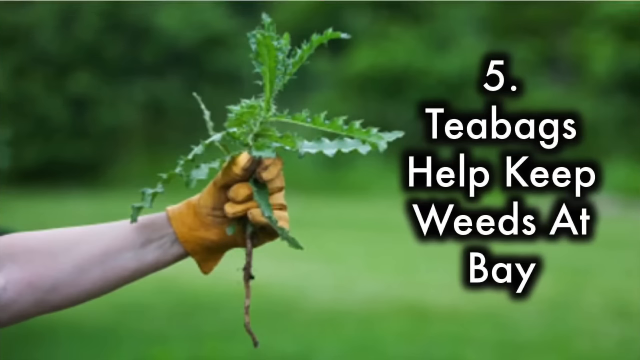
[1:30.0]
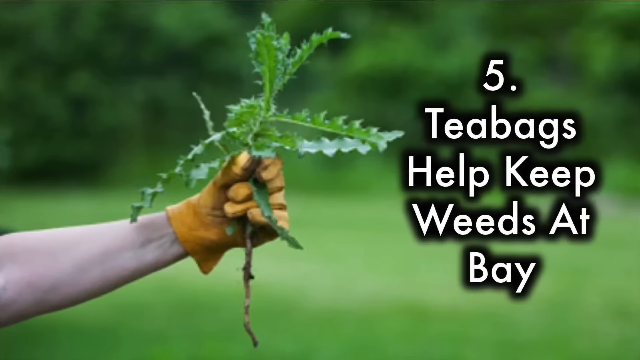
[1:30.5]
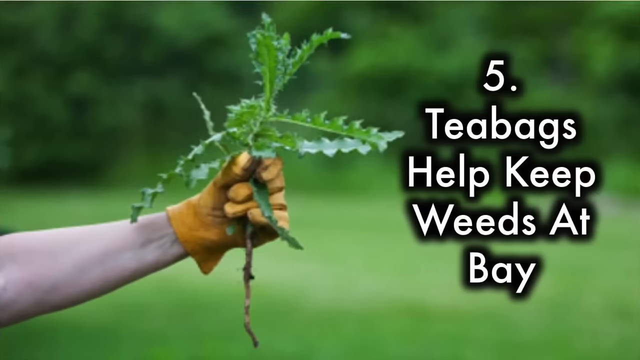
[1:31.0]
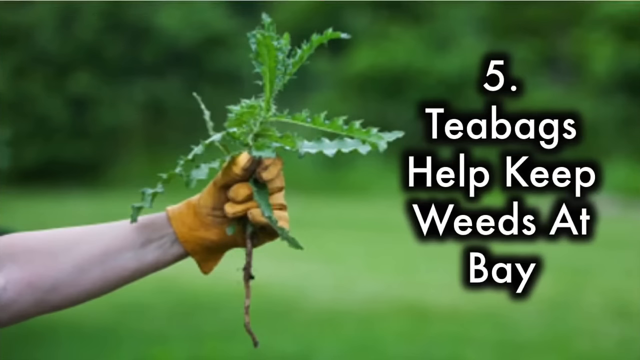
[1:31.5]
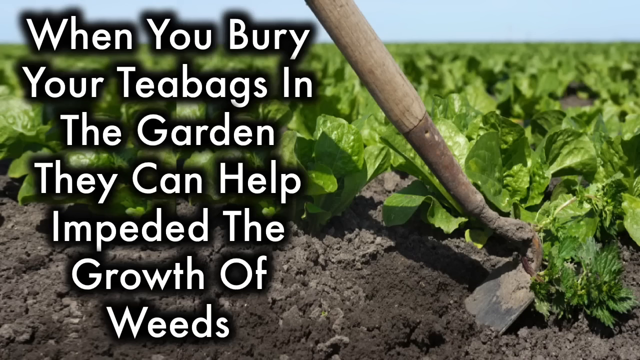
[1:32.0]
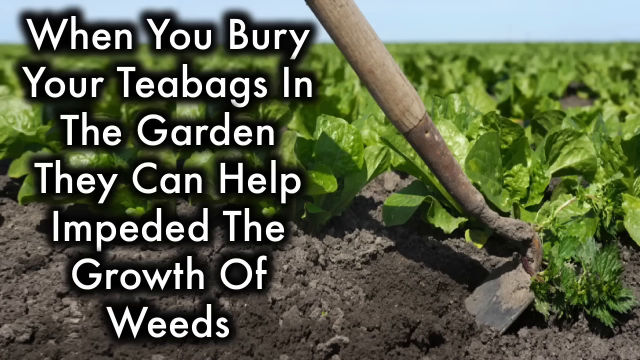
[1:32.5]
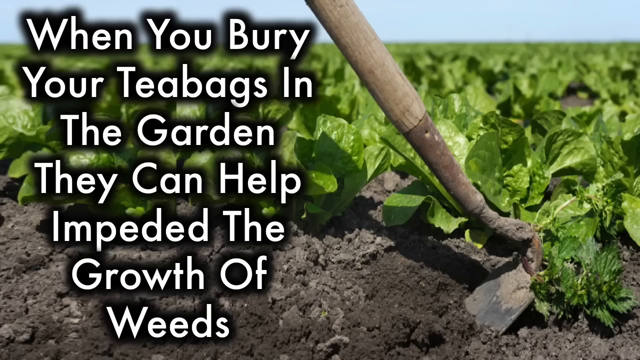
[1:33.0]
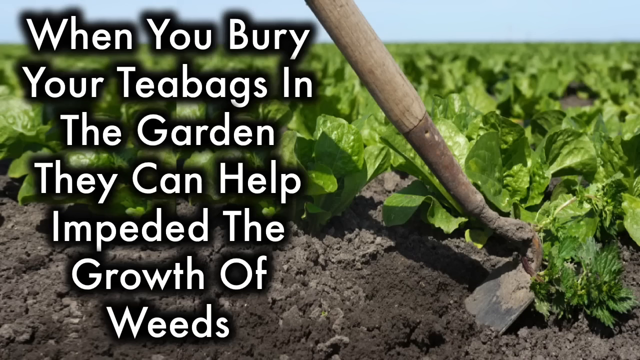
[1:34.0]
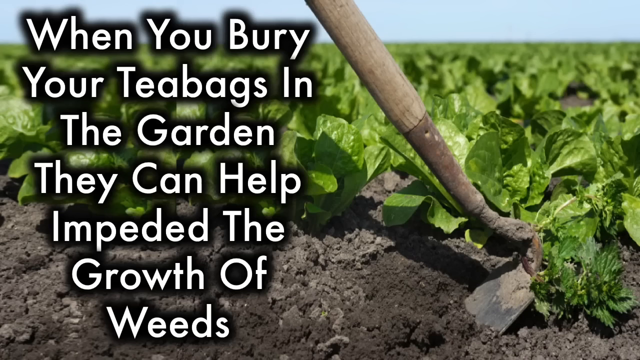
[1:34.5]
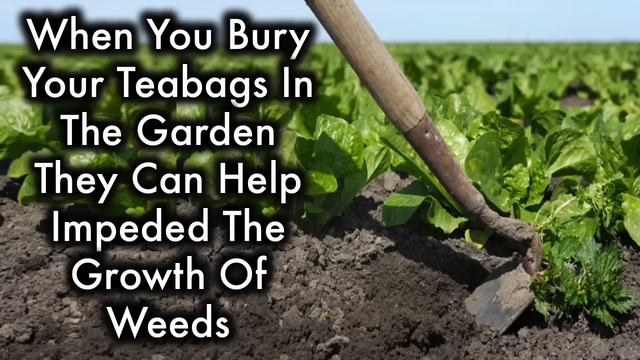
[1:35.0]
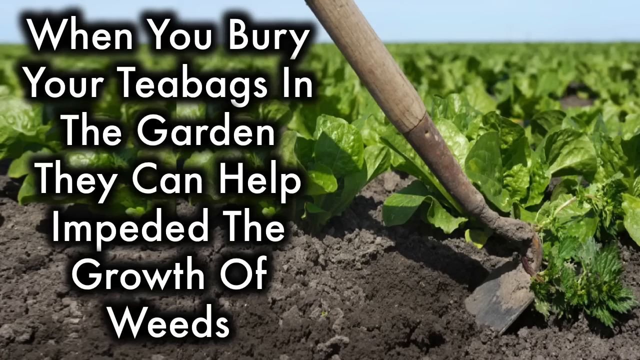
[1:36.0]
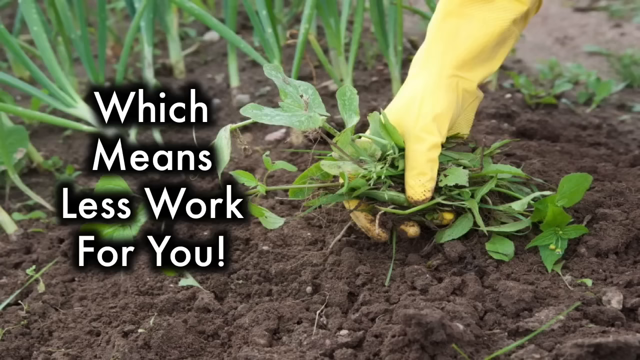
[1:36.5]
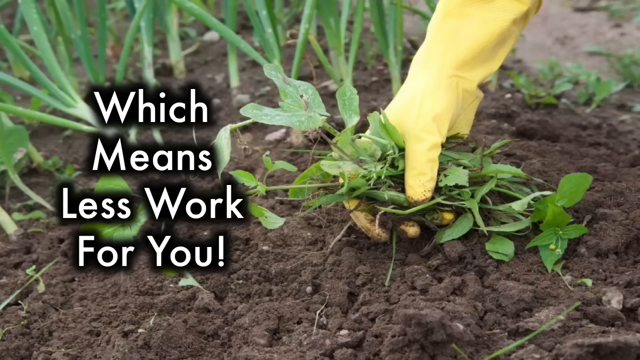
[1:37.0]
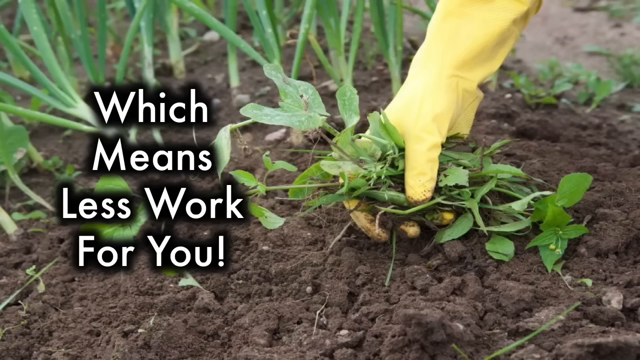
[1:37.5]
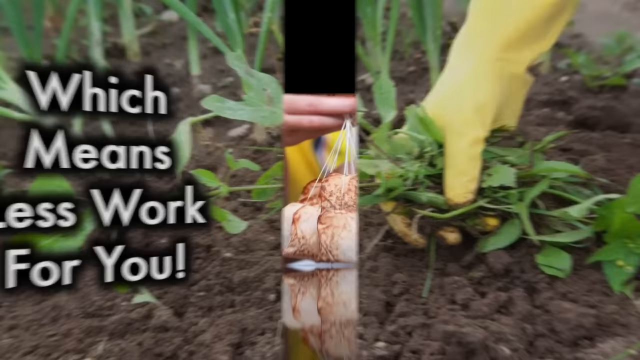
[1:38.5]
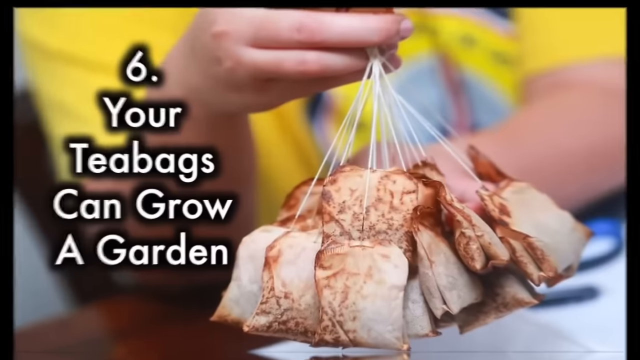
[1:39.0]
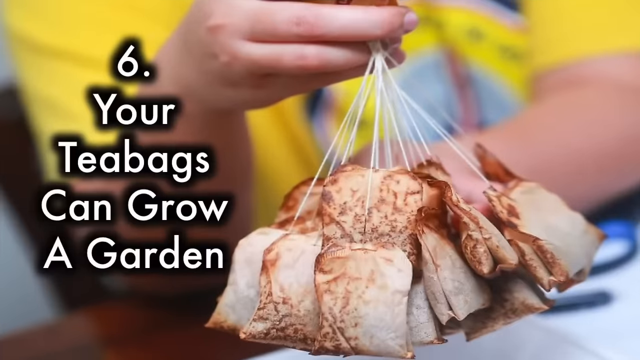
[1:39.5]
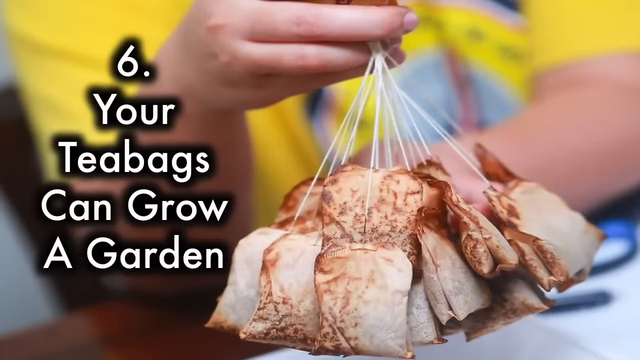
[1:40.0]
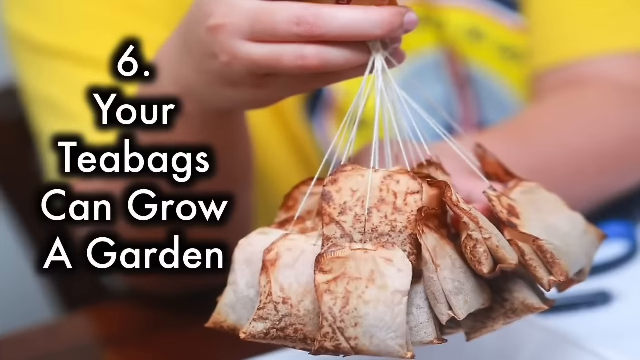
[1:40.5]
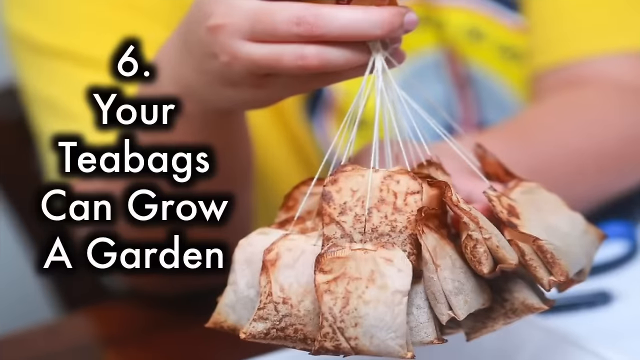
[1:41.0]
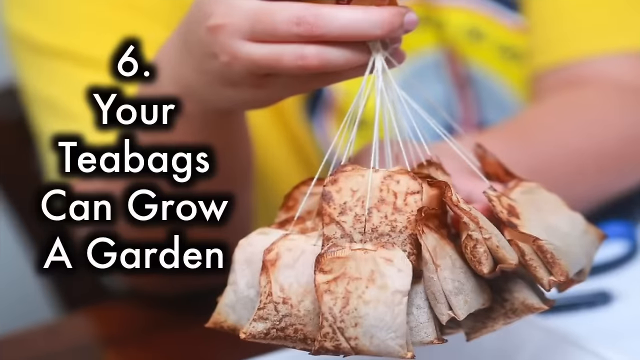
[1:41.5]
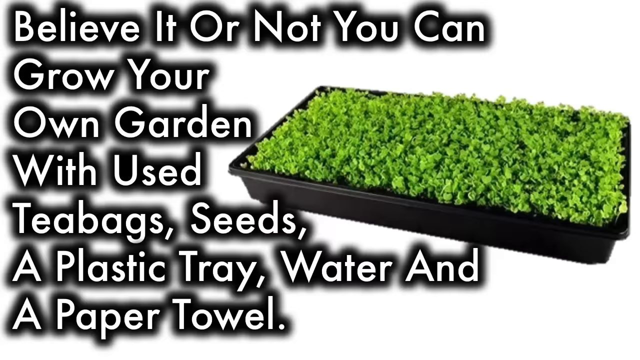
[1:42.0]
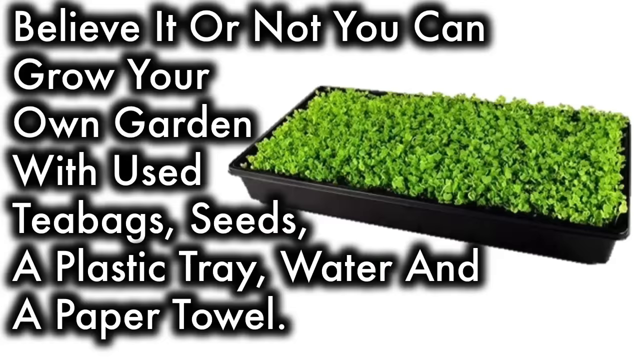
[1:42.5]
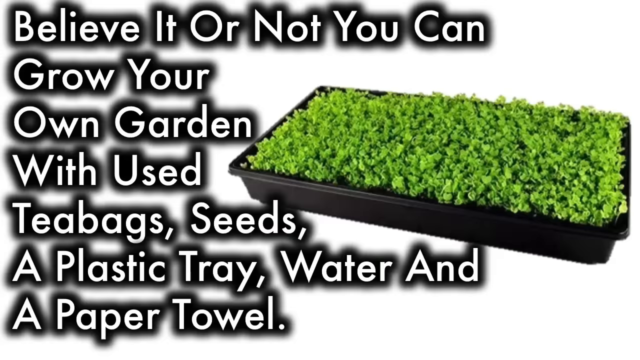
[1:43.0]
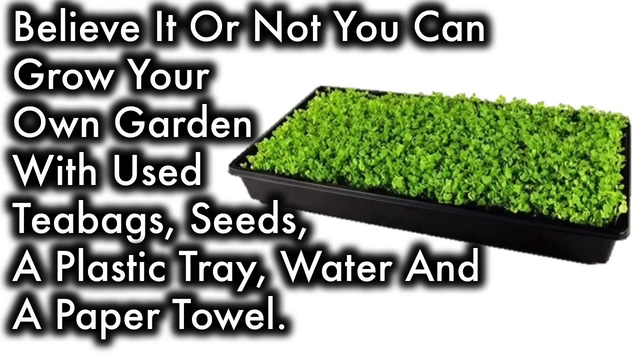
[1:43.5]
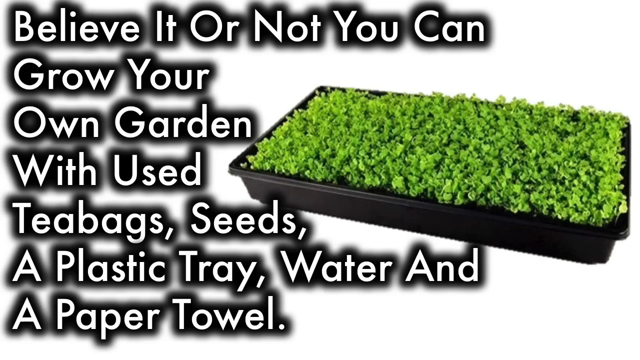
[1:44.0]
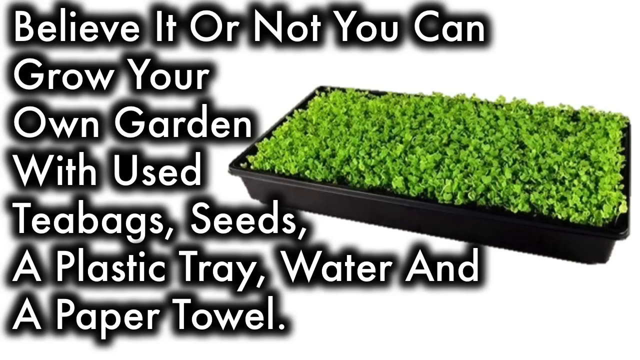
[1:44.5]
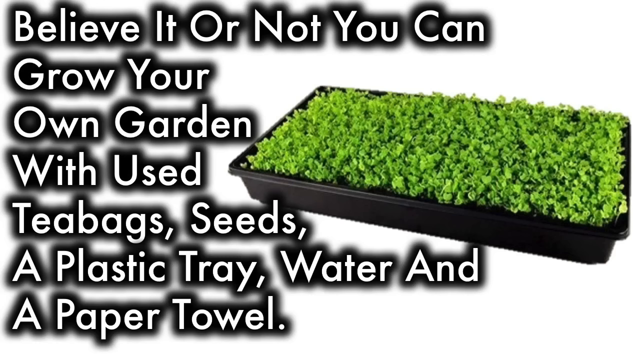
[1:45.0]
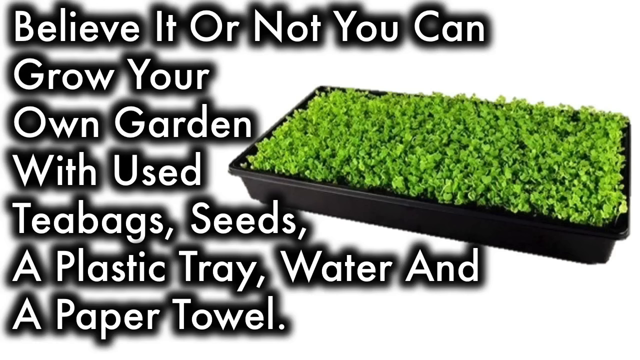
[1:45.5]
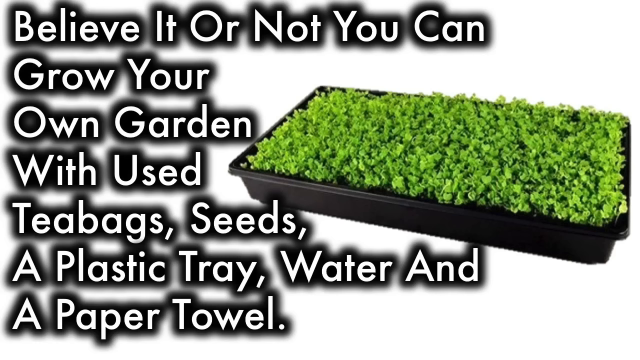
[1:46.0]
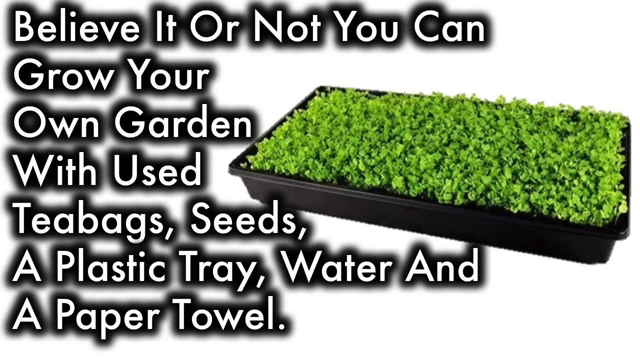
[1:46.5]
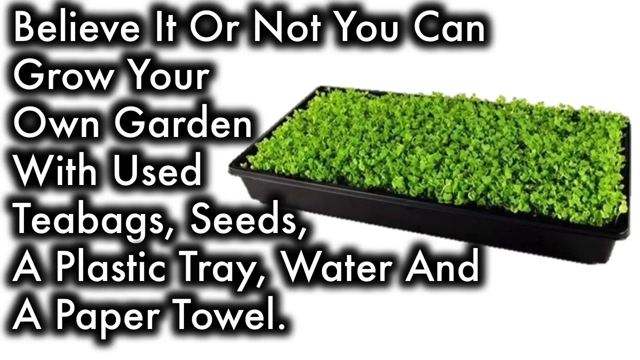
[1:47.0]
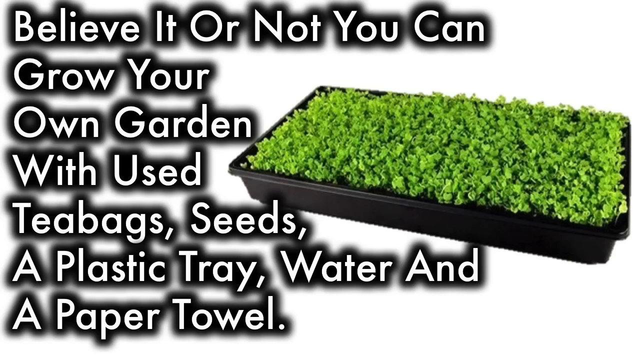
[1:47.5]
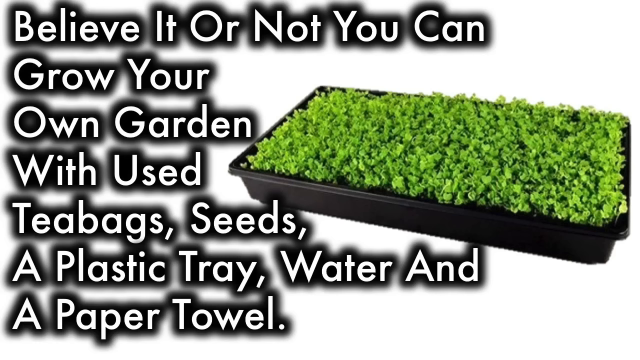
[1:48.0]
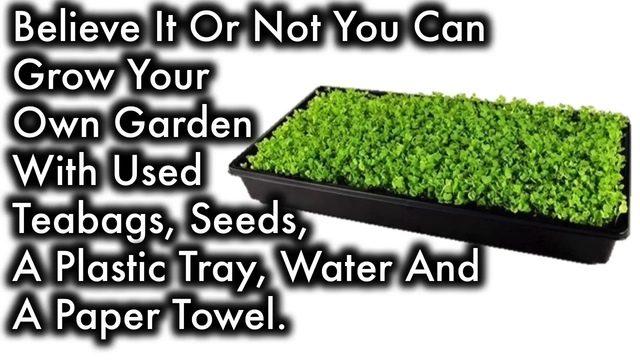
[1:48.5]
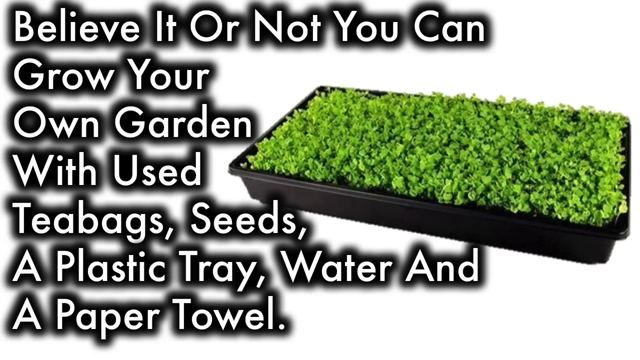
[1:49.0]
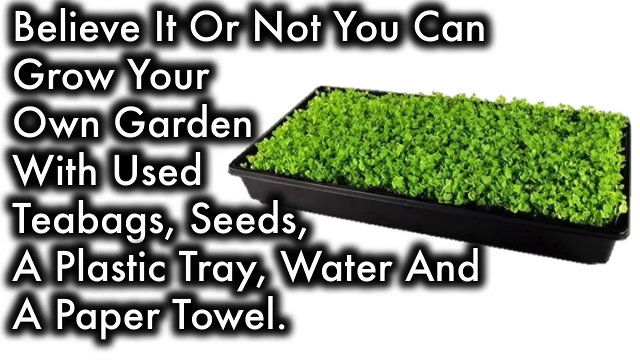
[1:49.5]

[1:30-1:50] A man stretches his hands, his left hand, which has a glove on, holding a plant. The fifth point appears: "Tea bags help keep weeds at bay," with the text "When you bury your tea bags in the garden, they can help impede the growth of weeds" and "which means less work for you." A farmer is shown weeding by hand, removing weeds from the soil or plants. The sixth point follows: "Your tea bags can grow a garden," with the text "Believe it or not, you can grow your own garden with used tea bags, seeds, a plastic tray, water, and a paper towel." A diagram shows a black tree with a green leaf or plant on it.